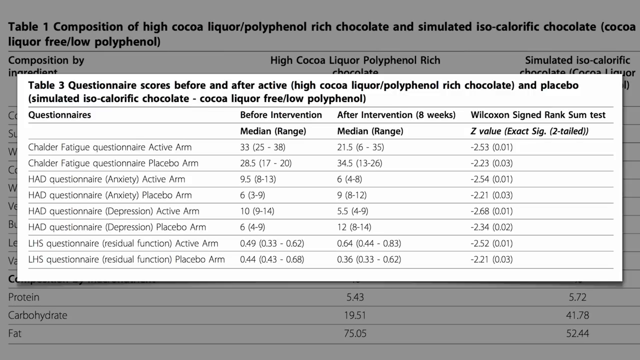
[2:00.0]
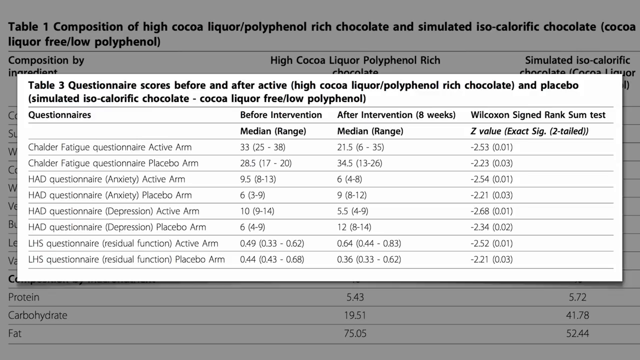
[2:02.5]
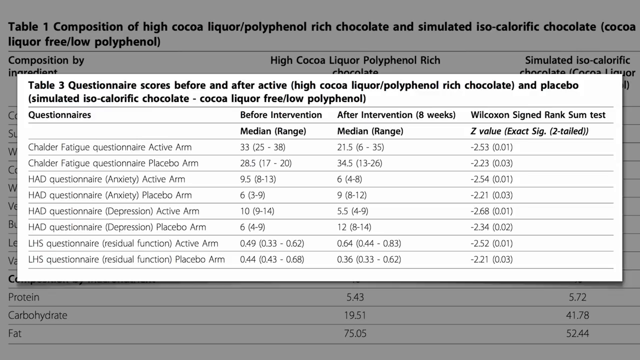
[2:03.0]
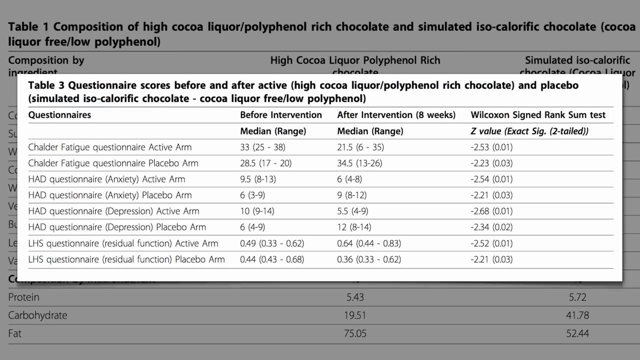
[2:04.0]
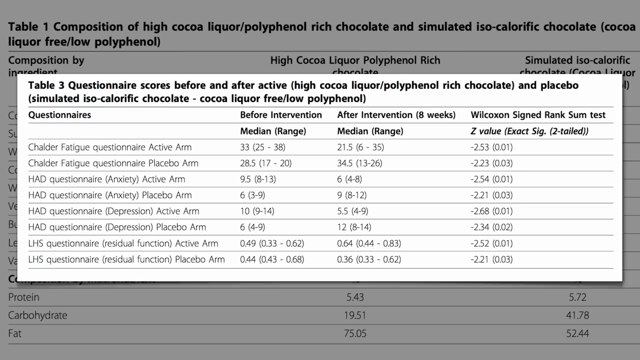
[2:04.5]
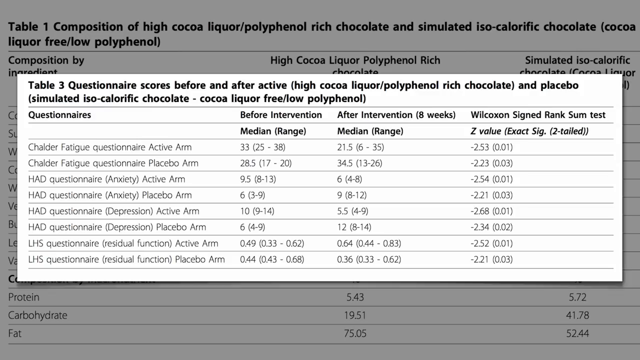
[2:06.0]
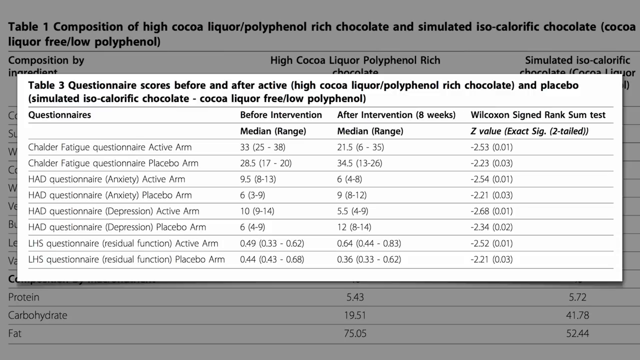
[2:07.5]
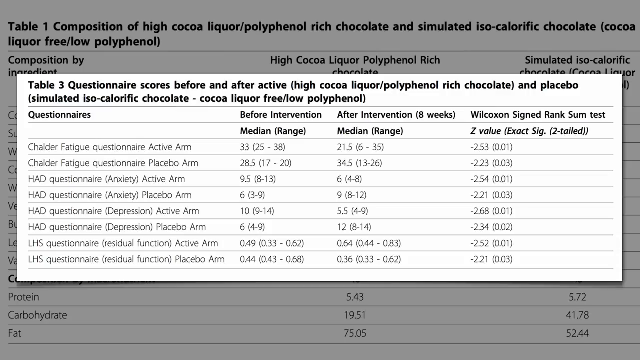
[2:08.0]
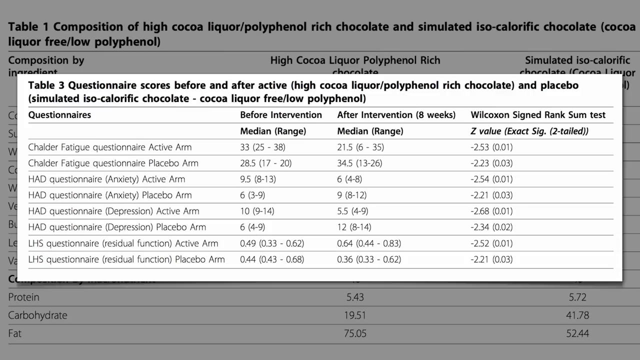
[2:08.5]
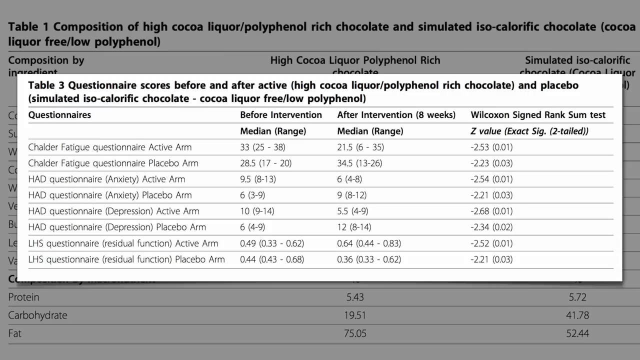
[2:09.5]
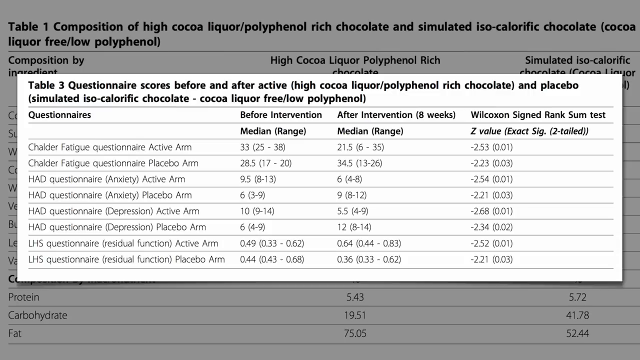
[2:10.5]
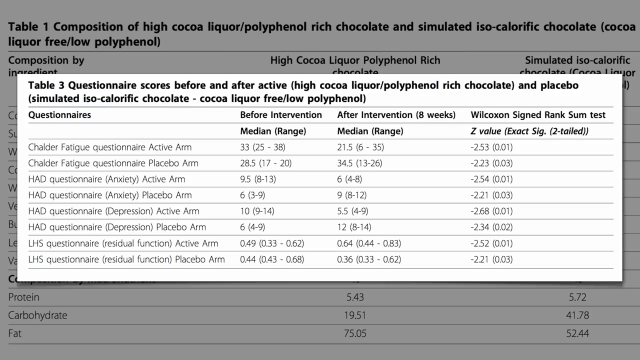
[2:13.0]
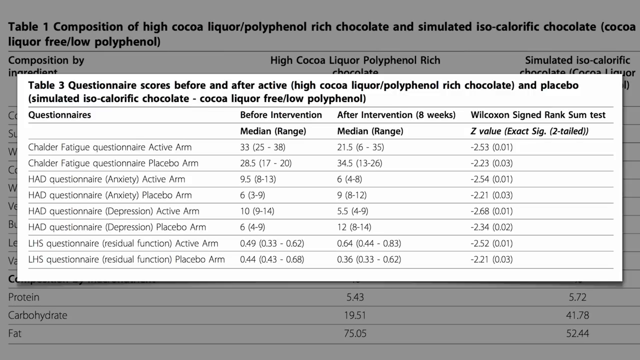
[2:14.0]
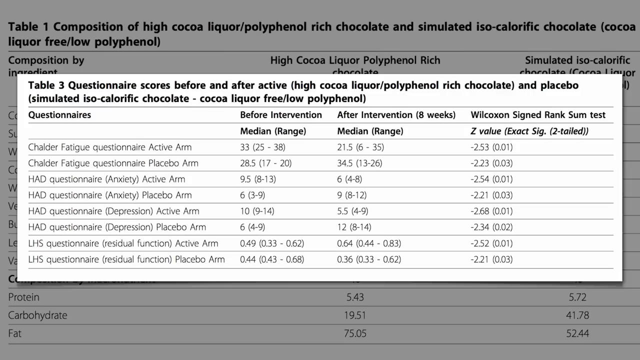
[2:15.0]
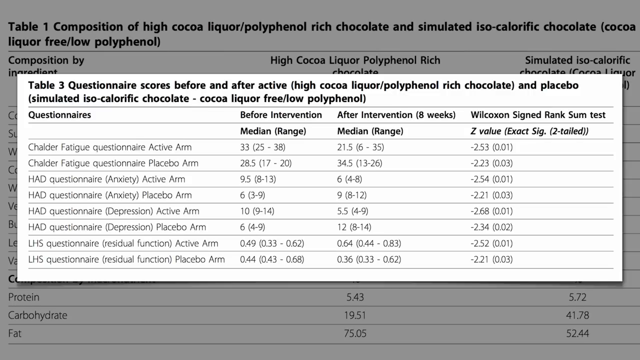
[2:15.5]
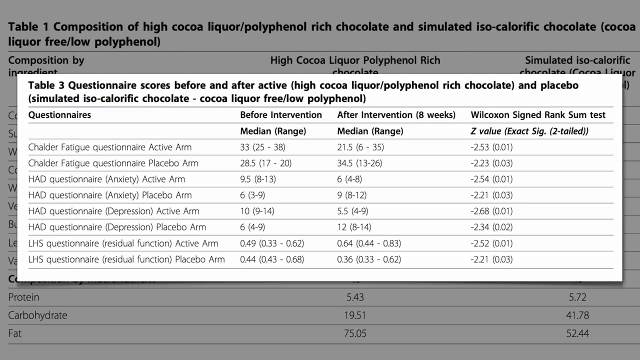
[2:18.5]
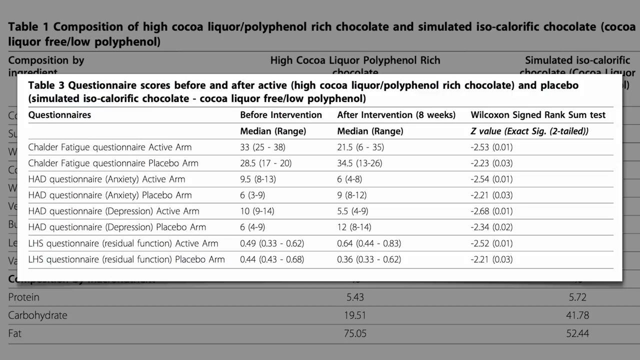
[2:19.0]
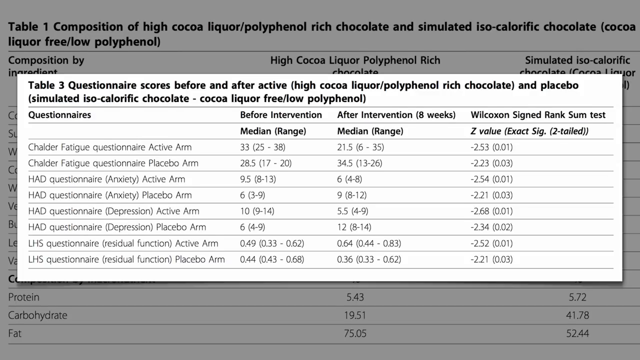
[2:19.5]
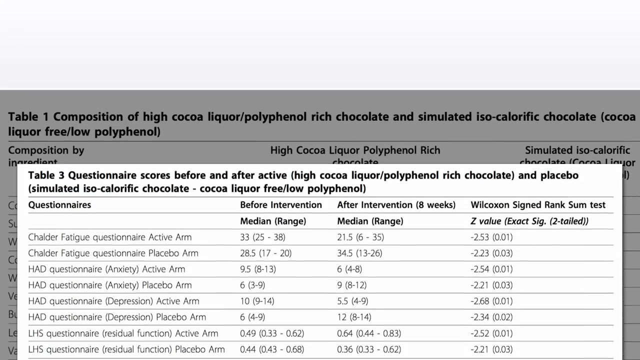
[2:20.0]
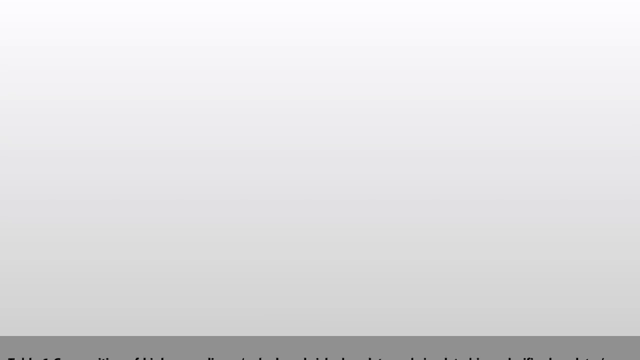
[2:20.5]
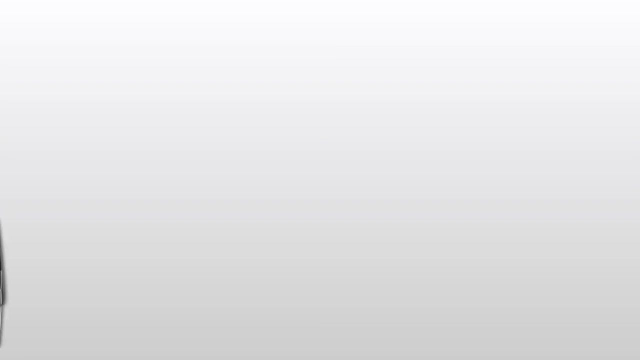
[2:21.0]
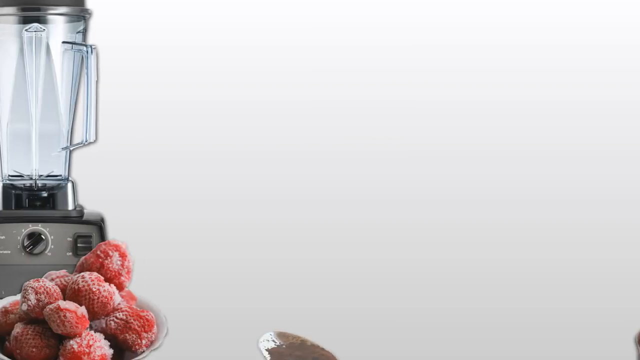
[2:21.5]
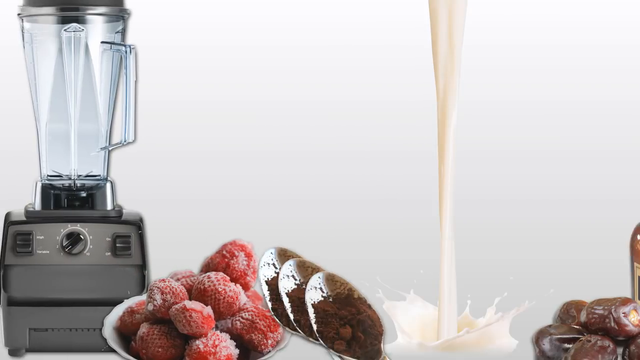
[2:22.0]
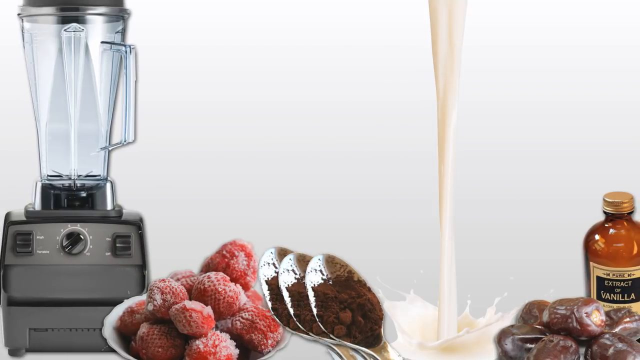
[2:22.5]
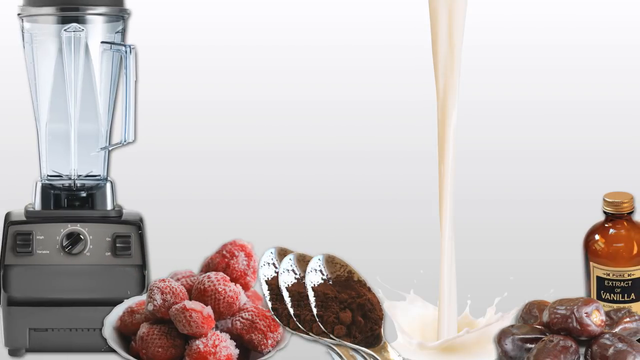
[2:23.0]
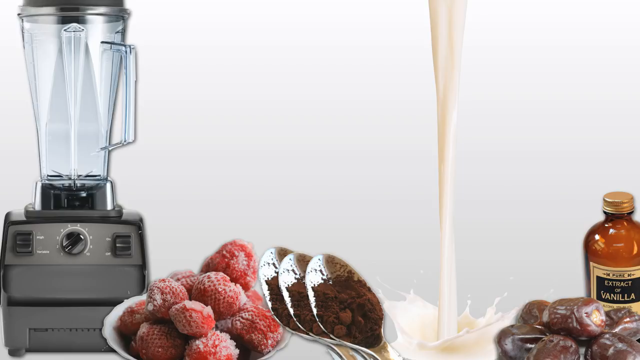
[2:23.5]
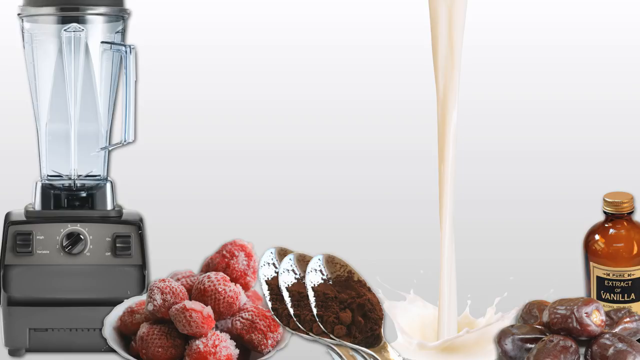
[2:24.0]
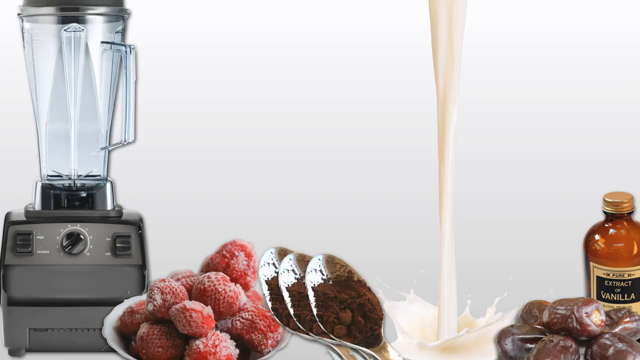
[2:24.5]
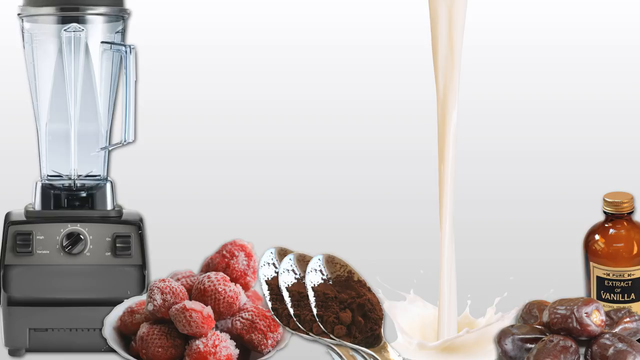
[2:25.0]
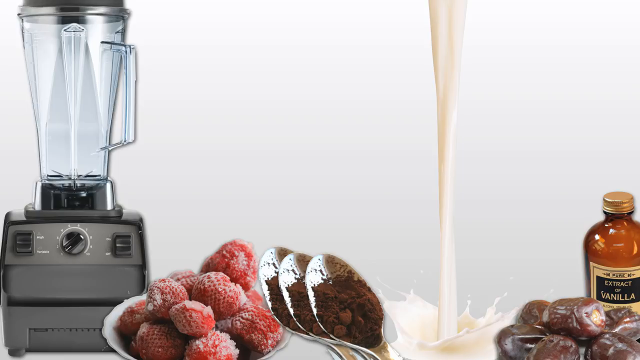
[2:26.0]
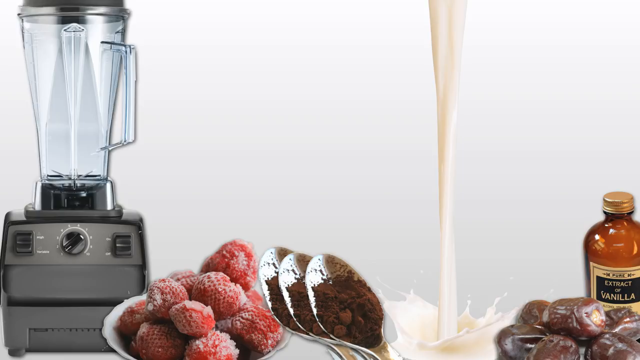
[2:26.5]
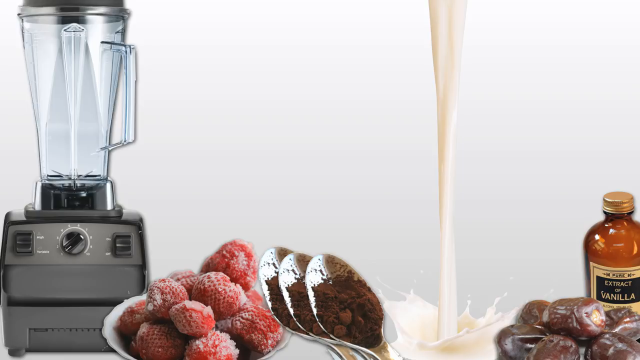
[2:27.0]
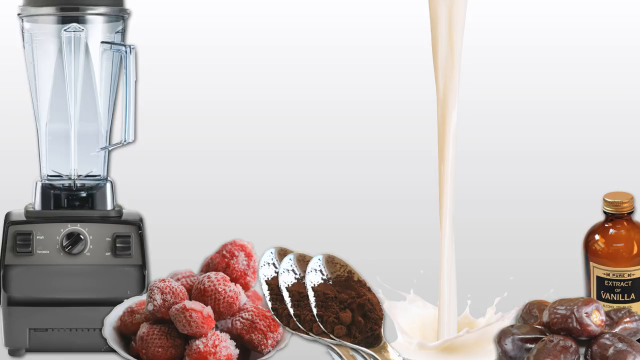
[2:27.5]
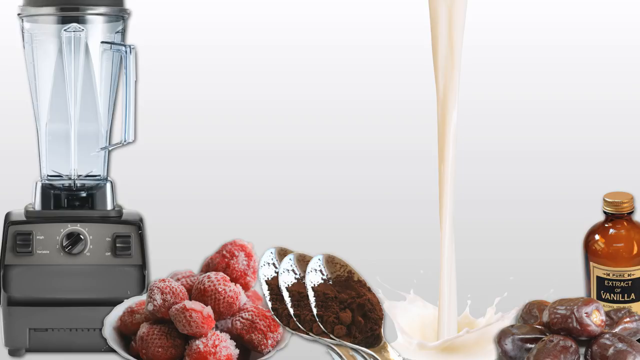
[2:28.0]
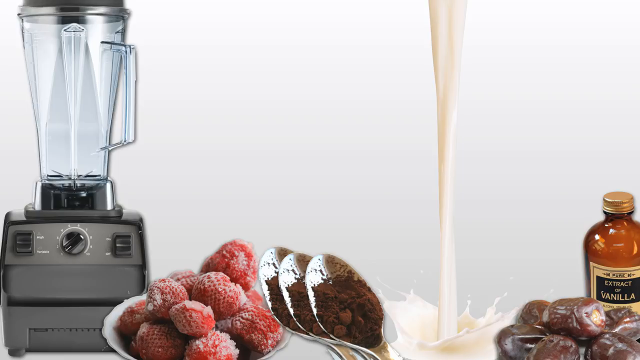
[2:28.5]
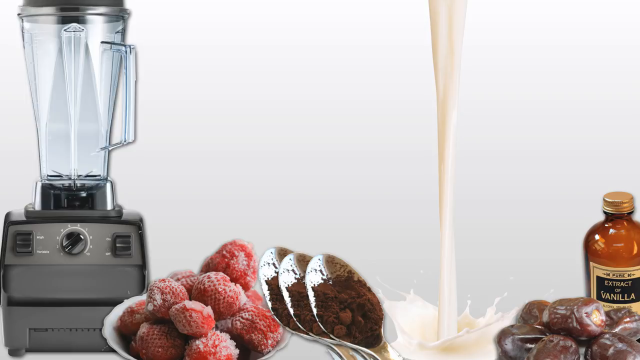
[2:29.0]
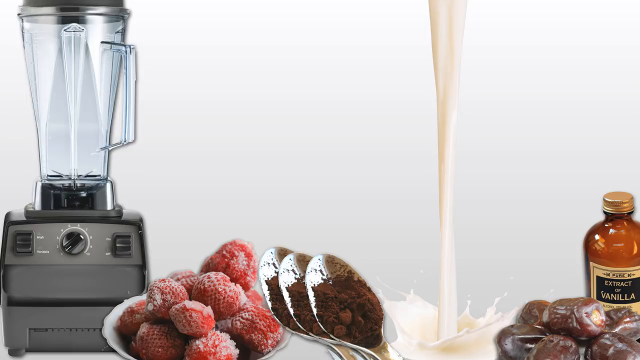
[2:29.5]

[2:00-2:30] In the background is a table titled "composition of high cocoa liquor or polyphenol rich chocolate and simulated isocalorific chocolate" in bold black letters. On top of it, another table is highlighted and visible, titled "questionnaires scores before and after active and placebo". This table has four columns: questionnaires, before intervention, after intervention and Wilcoxon signed rank sum test. In the second row, "median range" is written in the second column, "median range" in the third column and "z value" in the fourth column. Below this are eight rows of letters and numbers in black non-bold text. Only vertical lines are visible in the tables. The table is shown for about 20 seconds, then slides down the screen and disappears. The next screen has a mixer jar on the left and milk flowing from the top, in the middle slightly to the left. In between is a plate with cocoa powder, and there is a strawberry. On the right side is vanilla extract in a bottle, with dates partly visible to its left. The milk flowing from the top splashes on the ground.